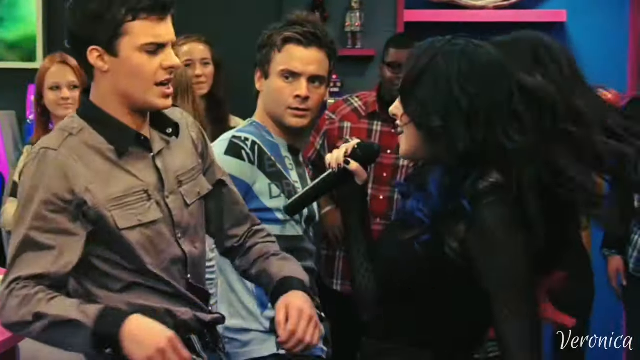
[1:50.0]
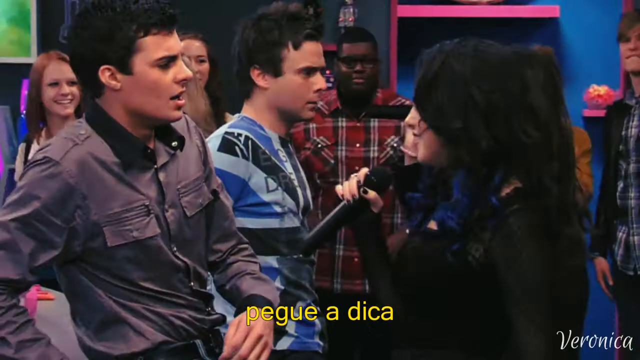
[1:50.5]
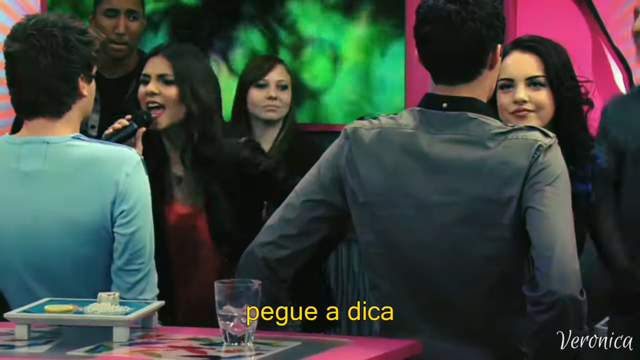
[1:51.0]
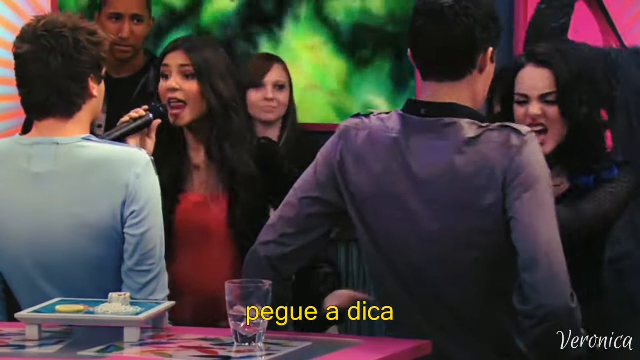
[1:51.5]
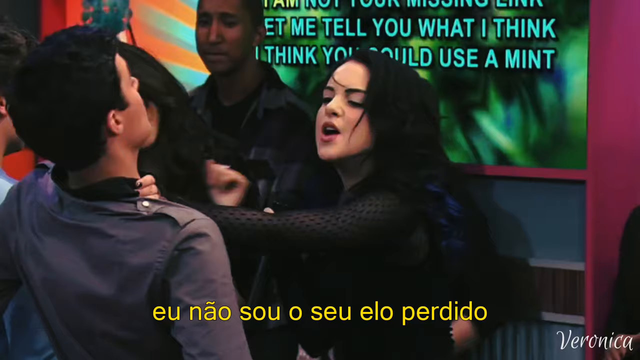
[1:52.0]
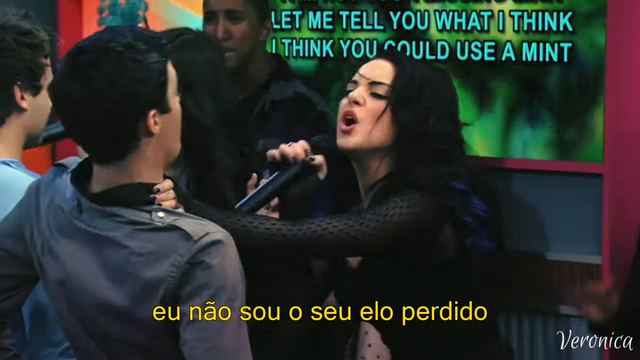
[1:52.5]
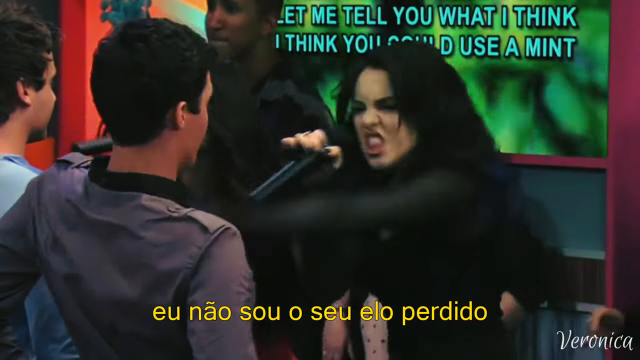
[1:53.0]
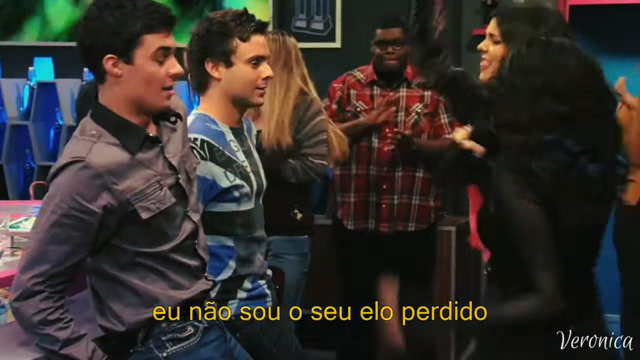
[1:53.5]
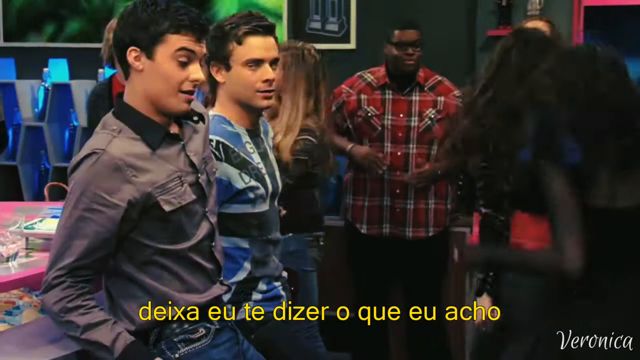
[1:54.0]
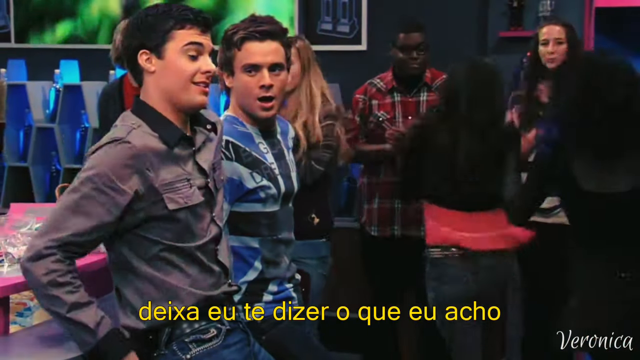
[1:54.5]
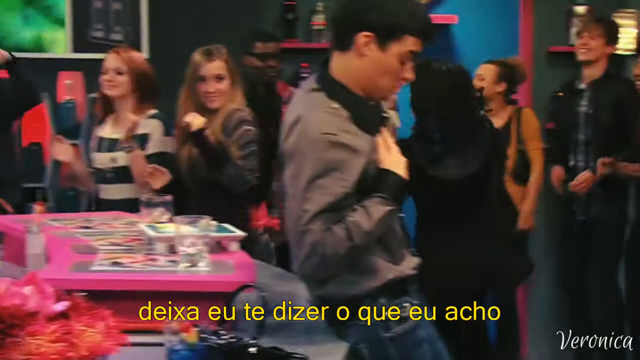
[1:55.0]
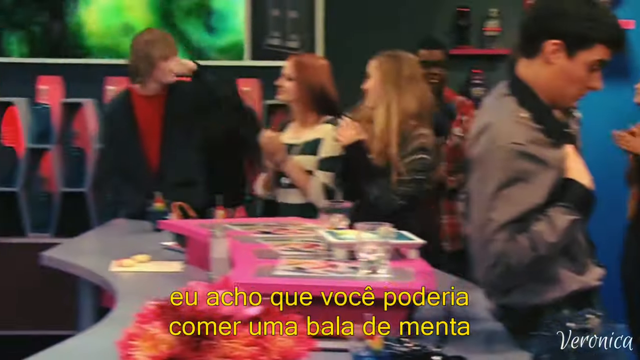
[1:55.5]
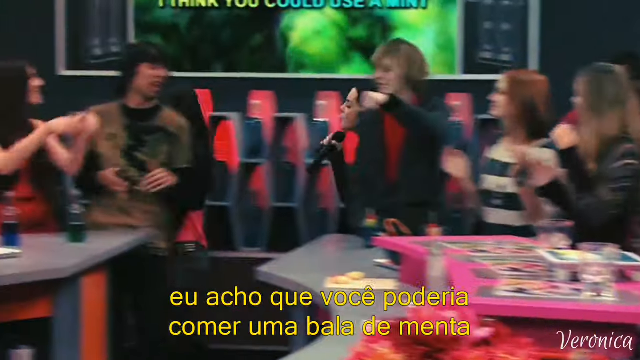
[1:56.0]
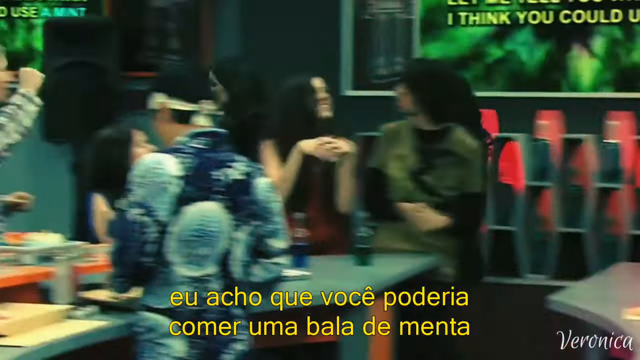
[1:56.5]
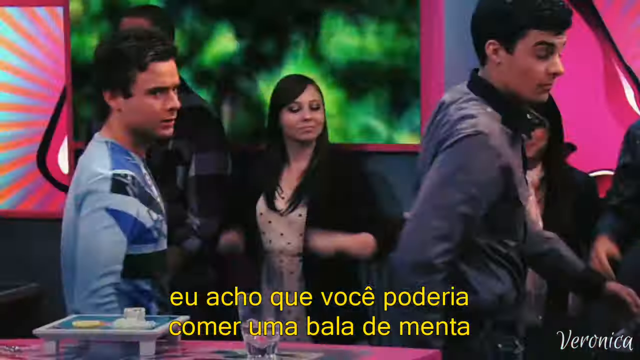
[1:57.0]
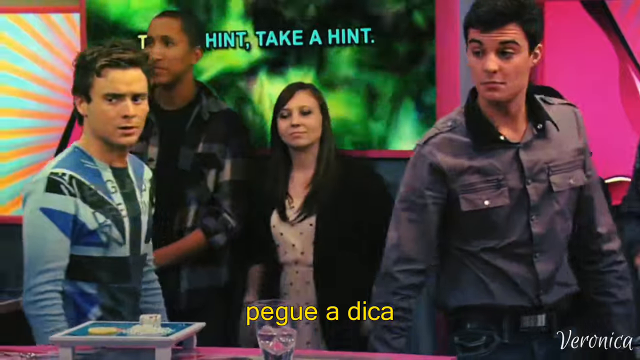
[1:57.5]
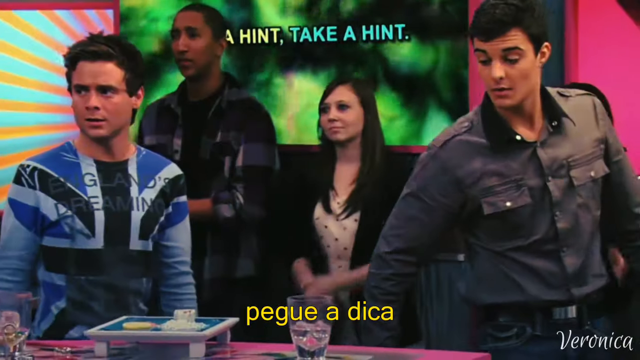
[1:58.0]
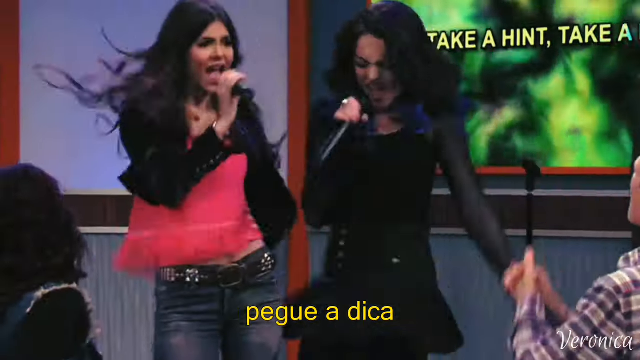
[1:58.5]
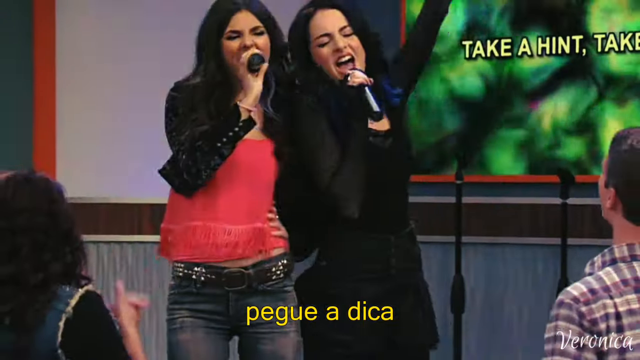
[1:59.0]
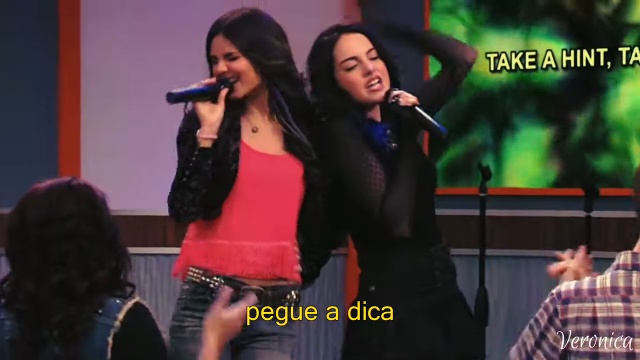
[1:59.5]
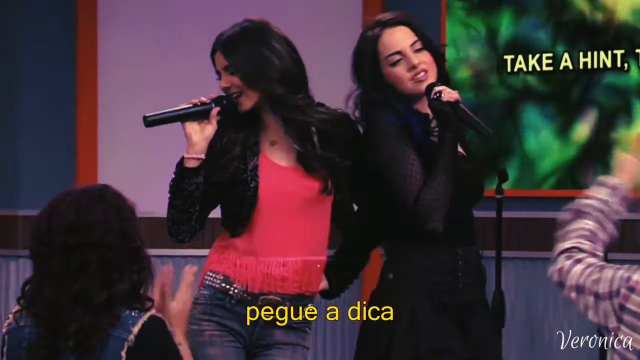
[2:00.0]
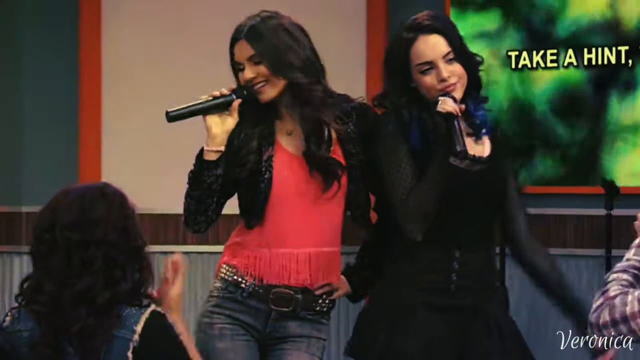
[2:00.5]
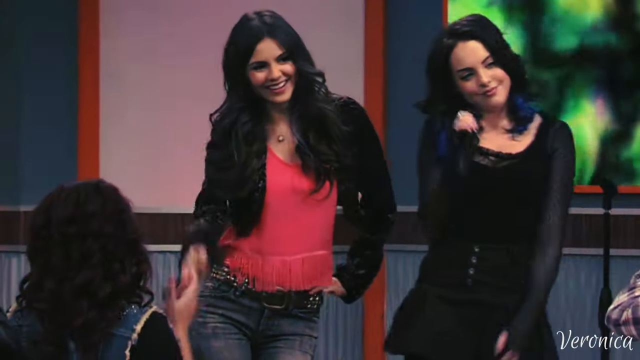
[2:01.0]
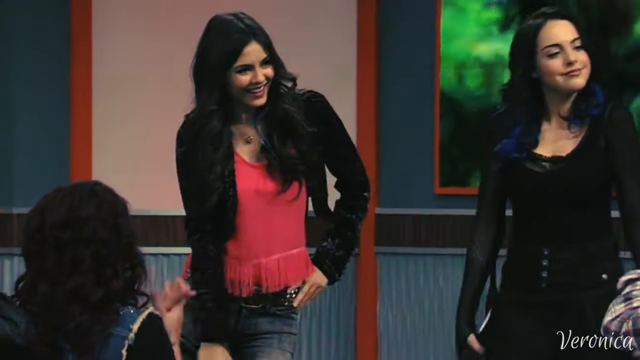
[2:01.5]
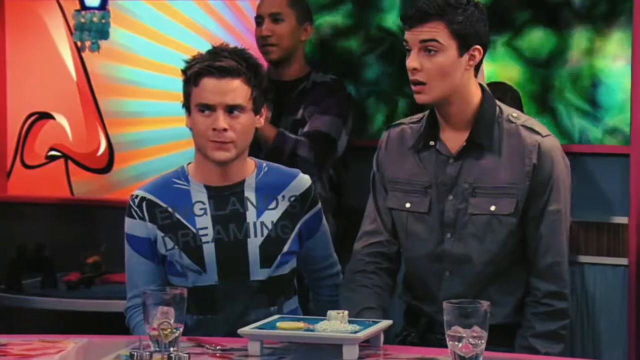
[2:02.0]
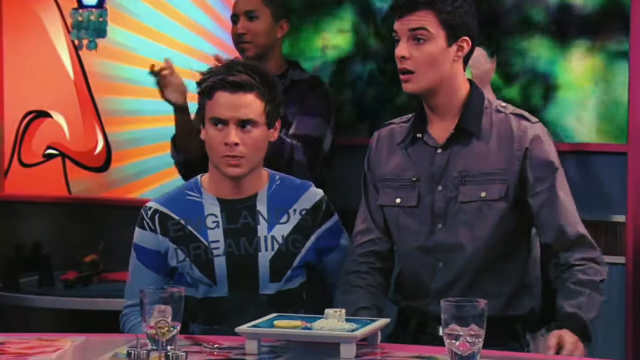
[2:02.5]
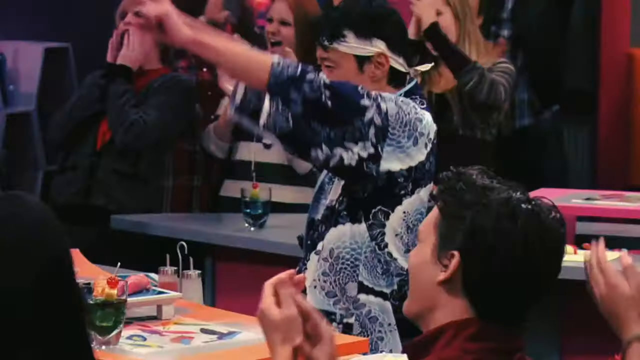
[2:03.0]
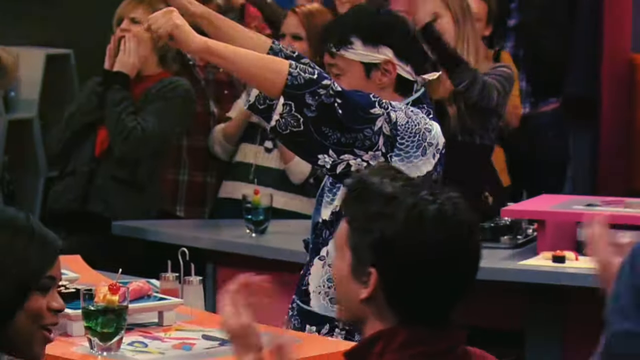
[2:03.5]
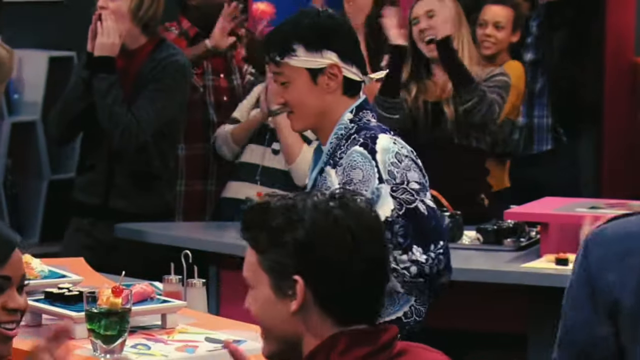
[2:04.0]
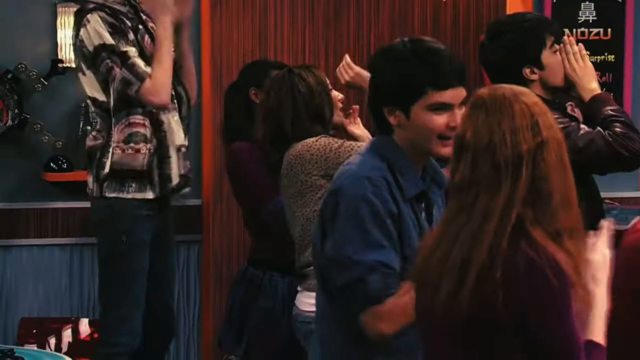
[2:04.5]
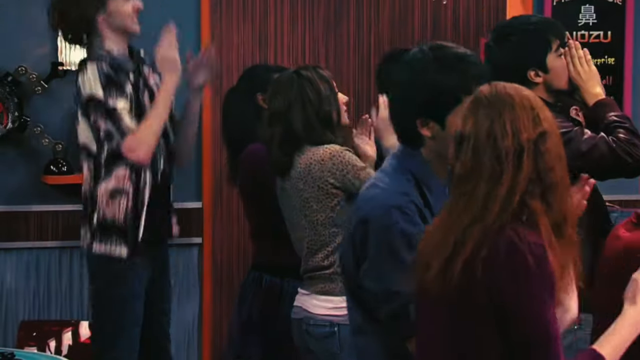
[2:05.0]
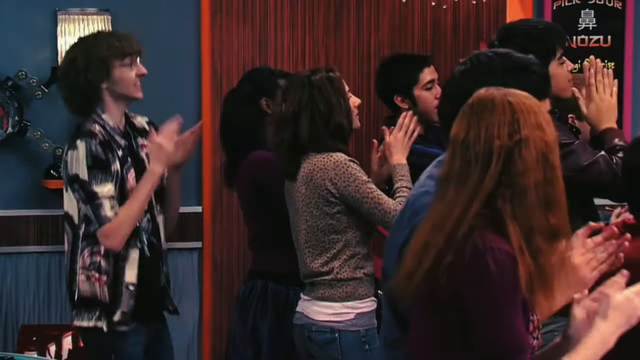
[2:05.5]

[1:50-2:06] The two karaoke singers remain aggressive toward the two men, one in the dark shirt and one in the blue British shirt, singing loudly directly into their faces, pointing, and holding their microphones up at them. After a moment they run together toward the stage, still singing, while the two men turn back around toward the stage. The women finish the song at center stage. The audience cheers, including the people they interacted or danced with earlier. The sushi worker in the blue dragon shirt and white headband points up and applauds them, and the rest of the group applauds too. Everyone jumps around. The two men look back at the women, appearing dejected, with a look of sadness and defeat. The women finish their song and celebrate with the crowd, which jumps up and down while clapping constantly.